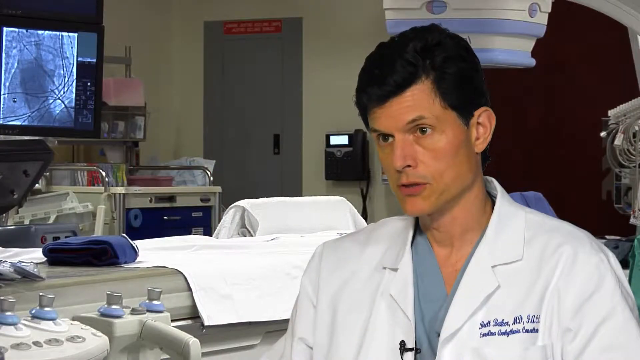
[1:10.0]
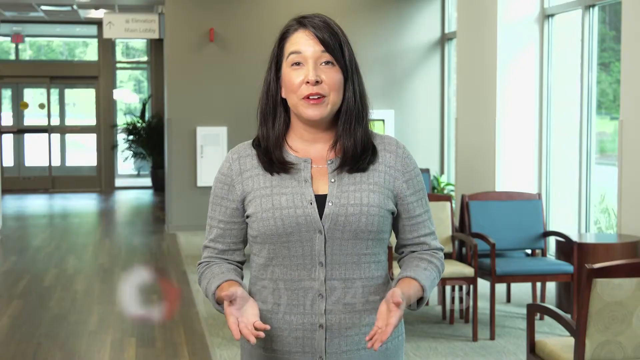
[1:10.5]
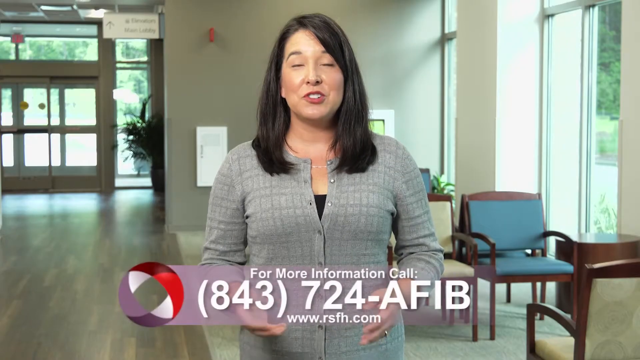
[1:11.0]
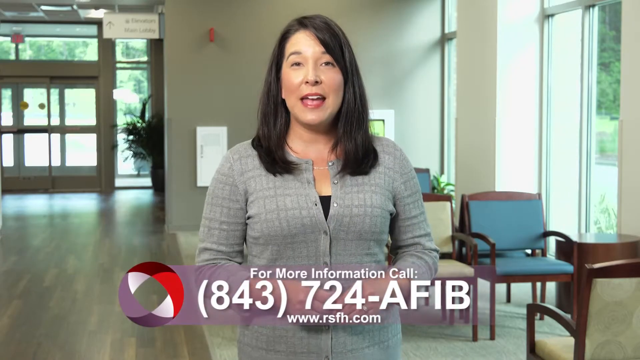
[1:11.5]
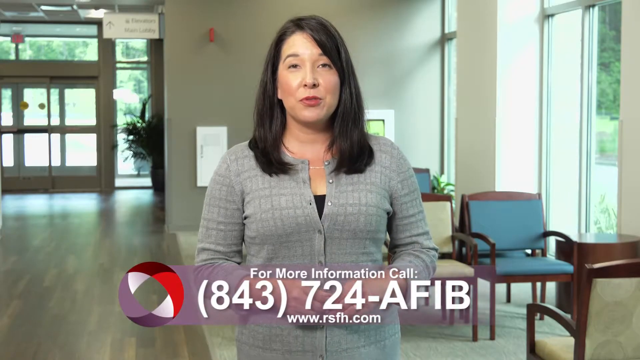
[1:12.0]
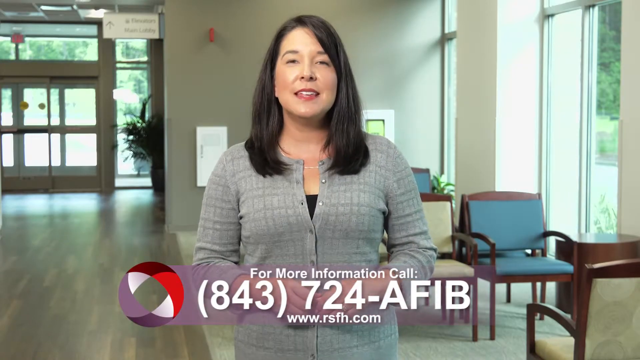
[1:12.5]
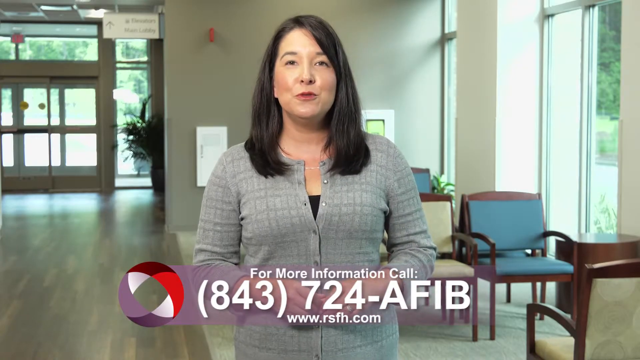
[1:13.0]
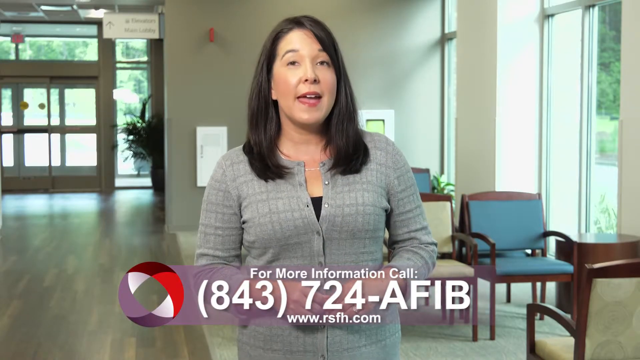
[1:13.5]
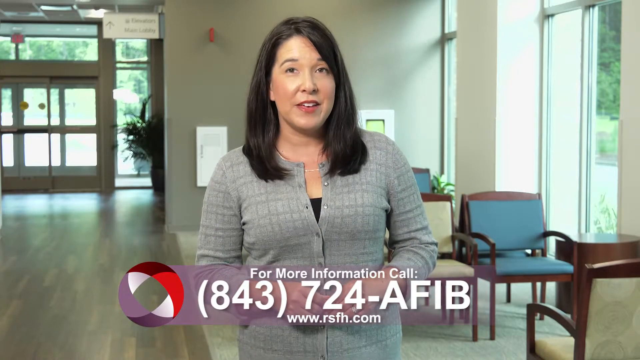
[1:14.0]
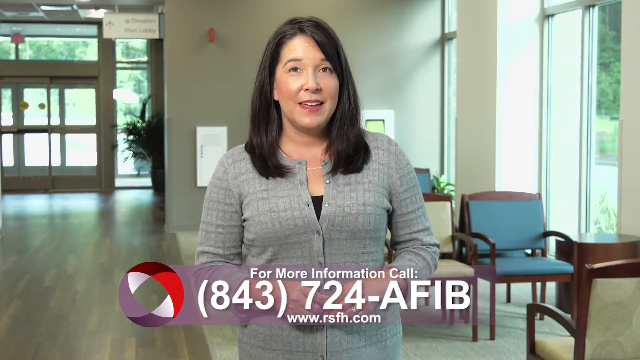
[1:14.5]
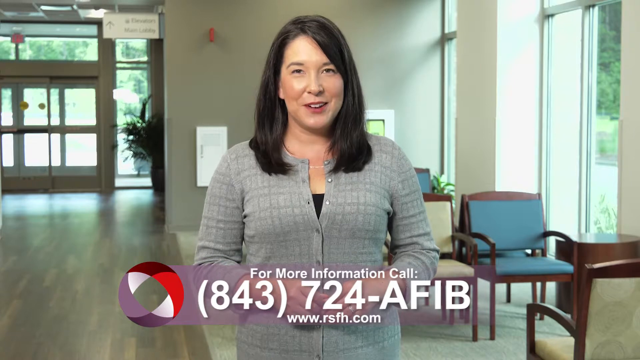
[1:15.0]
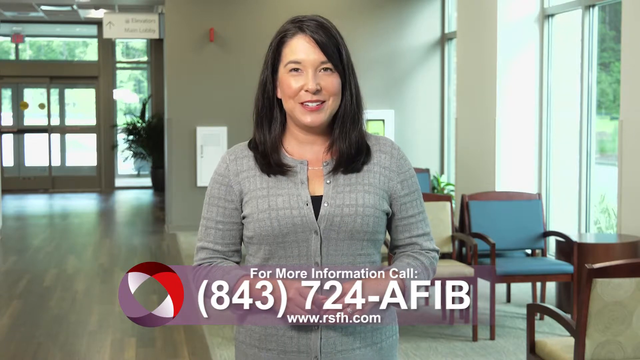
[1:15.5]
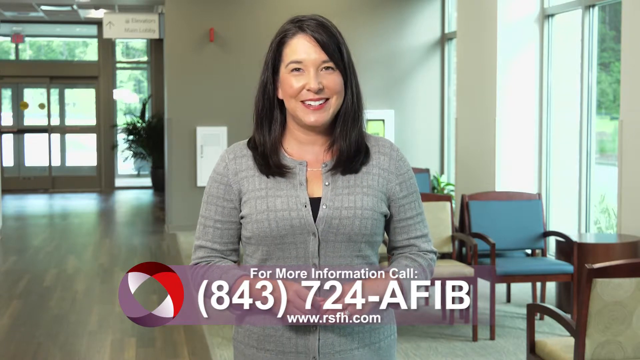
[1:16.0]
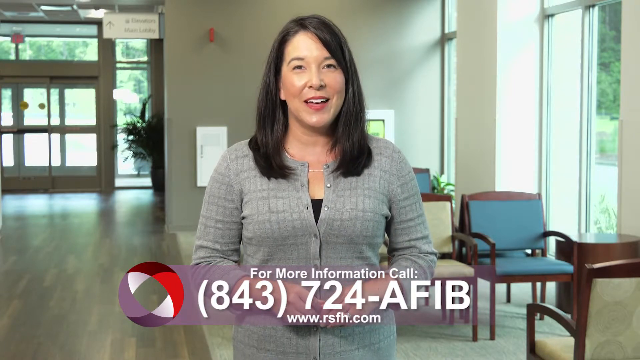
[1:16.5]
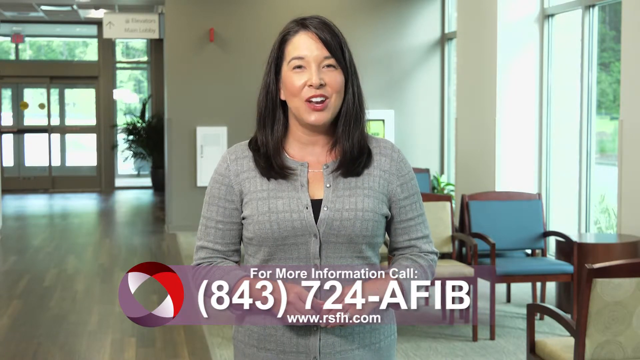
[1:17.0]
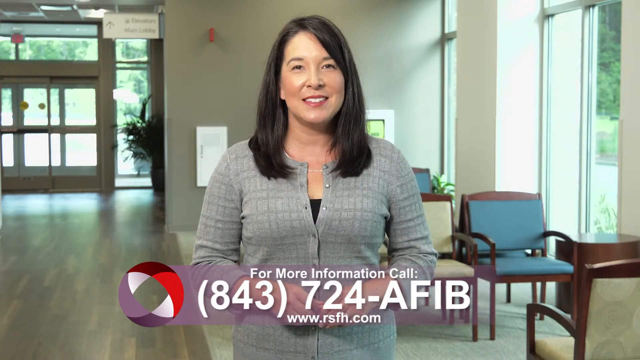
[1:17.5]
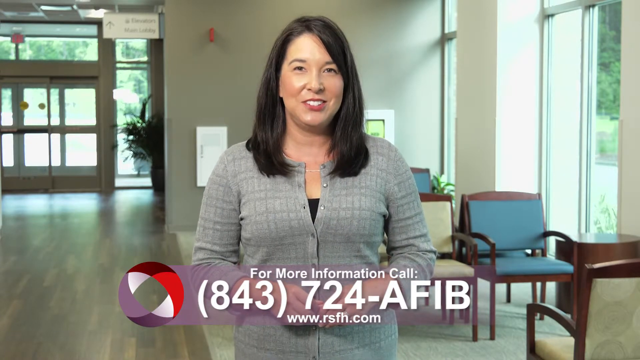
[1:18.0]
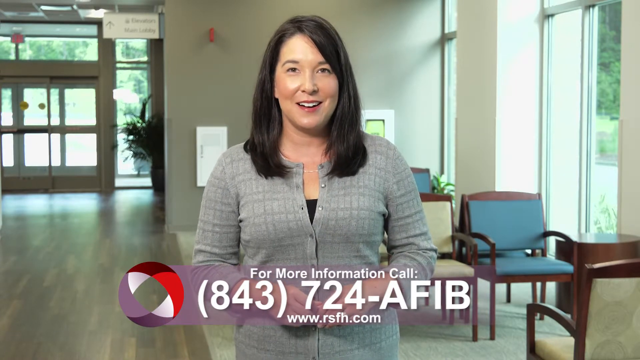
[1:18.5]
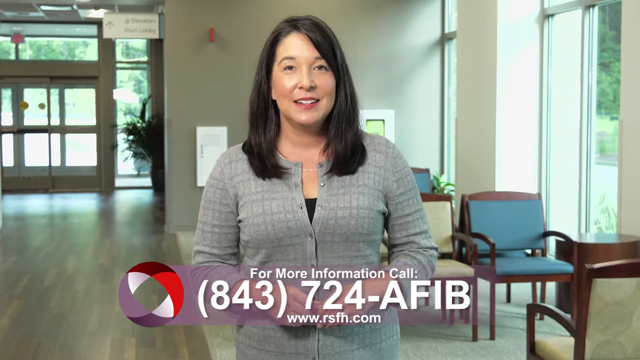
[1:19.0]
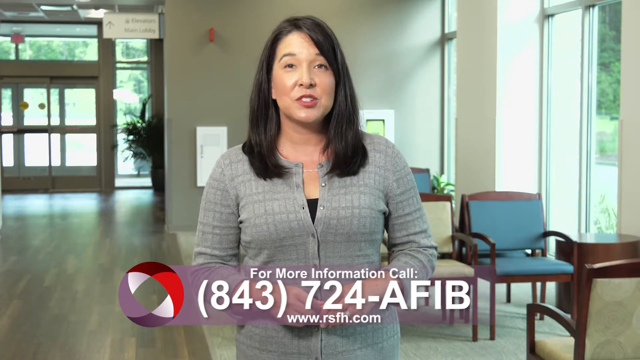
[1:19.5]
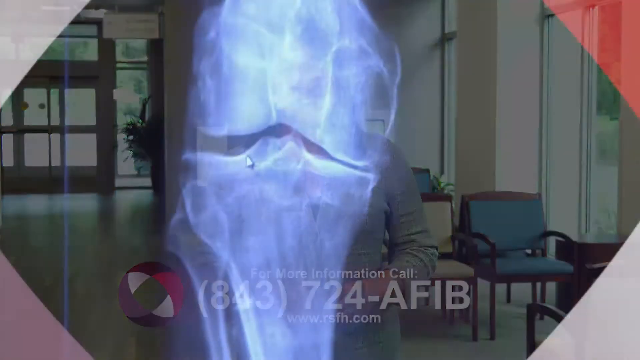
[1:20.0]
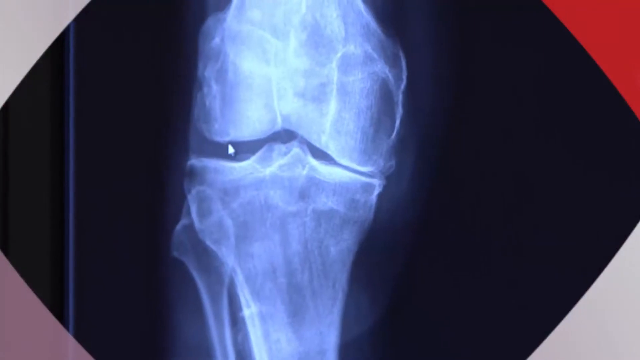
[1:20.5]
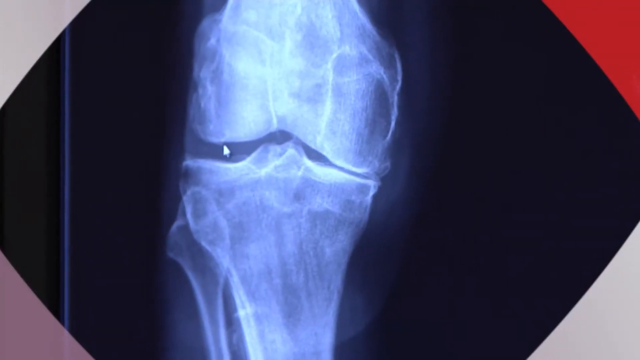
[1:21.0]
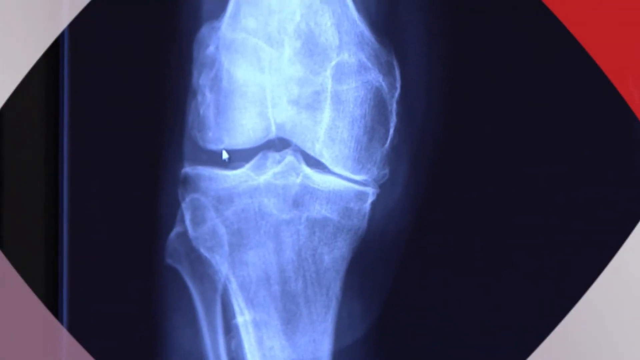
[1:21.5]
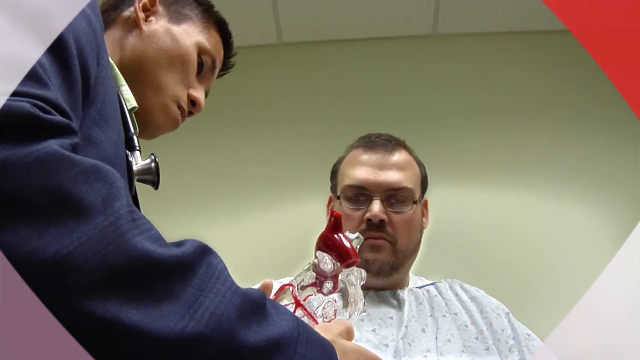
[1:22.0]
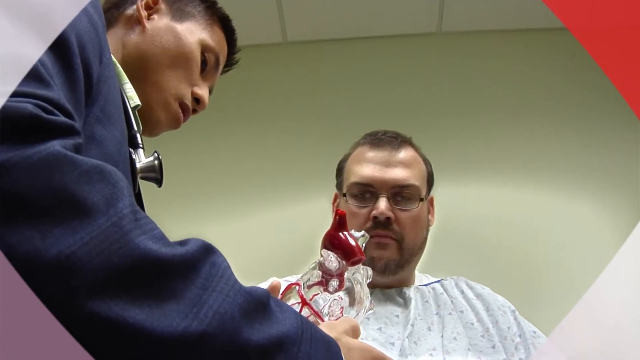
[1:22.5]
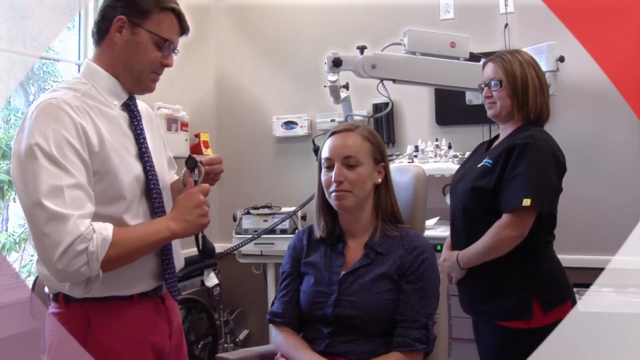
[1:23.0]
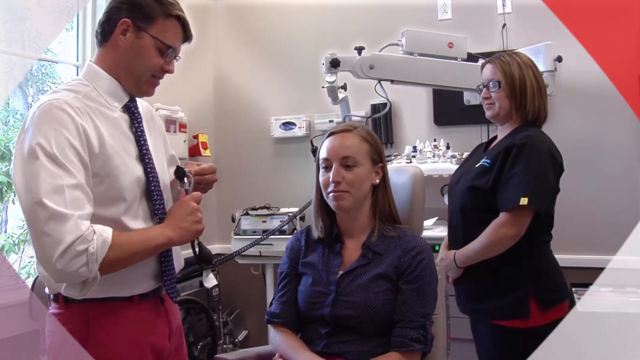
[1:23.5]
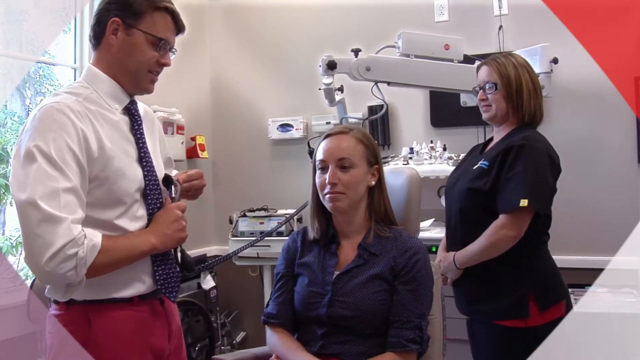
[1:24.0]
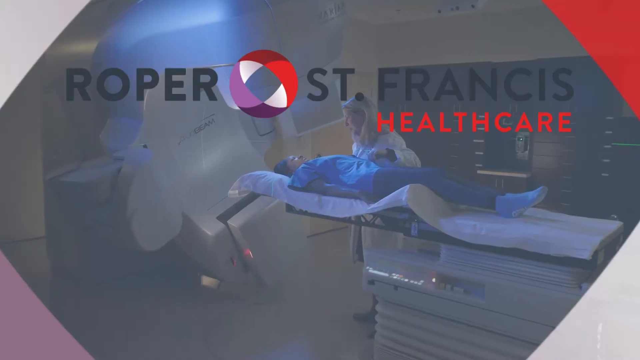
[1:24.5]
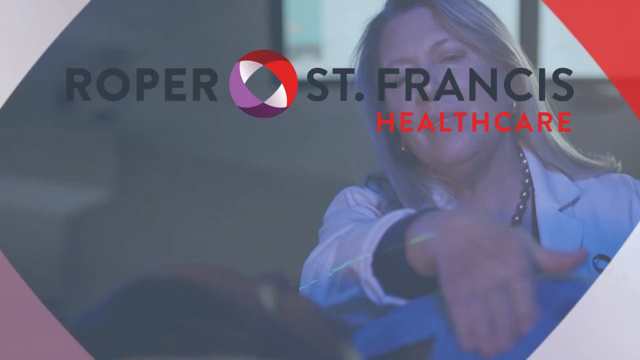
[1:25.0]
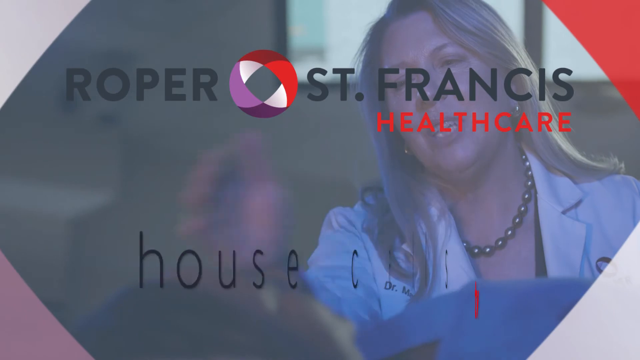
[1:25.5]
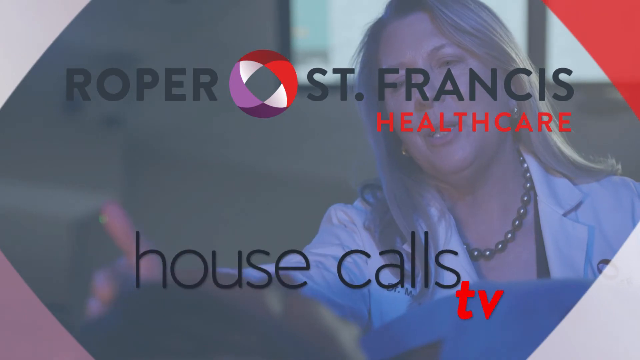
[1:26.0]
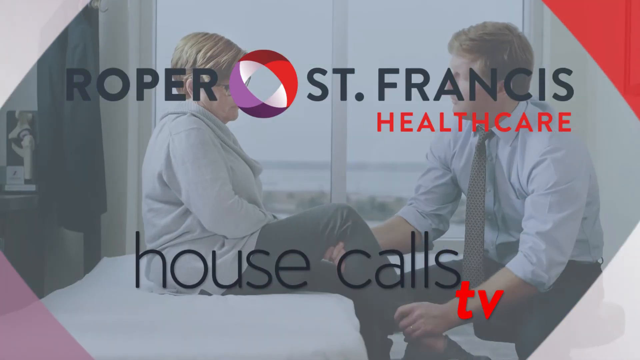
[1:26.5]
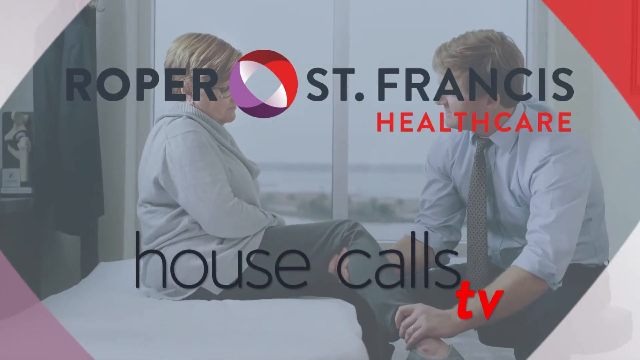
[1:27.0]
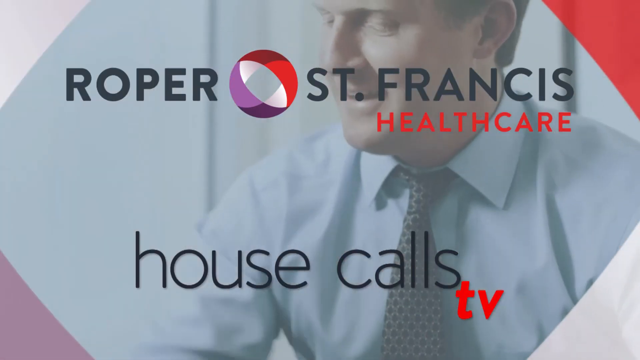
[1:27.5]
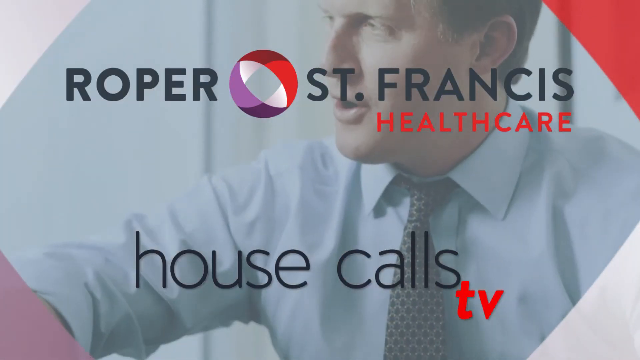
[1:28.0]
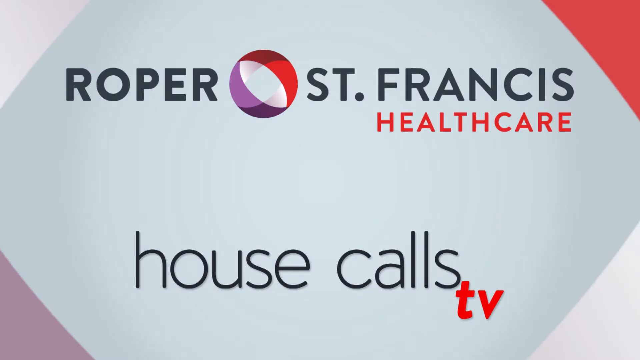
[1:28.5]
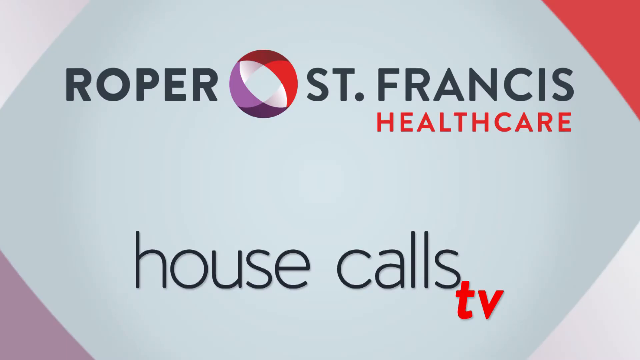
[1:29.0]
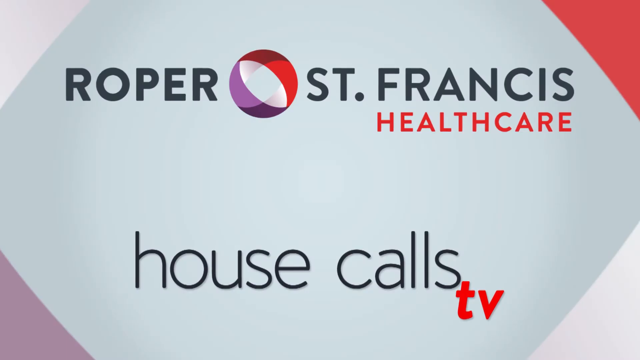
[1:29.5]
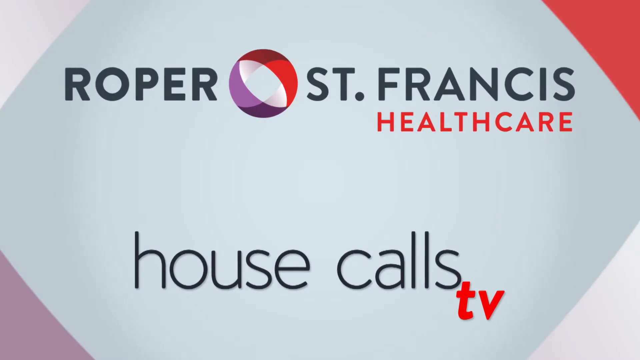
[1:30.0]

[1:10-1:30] The final credits appear while the host talks, back in the hospital lobby. A phone number, "843-724," and the abbreviation "AFIB" are shown at the bottom of the video, along with the URL of the website, smaller and toward the middle. The video transitions to a CAT scan of a bone graph, and a compilation of patients and things being done for them, seemingly including a CAT scan, closes the video.